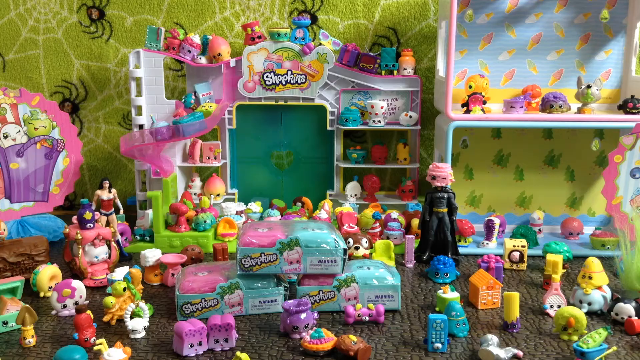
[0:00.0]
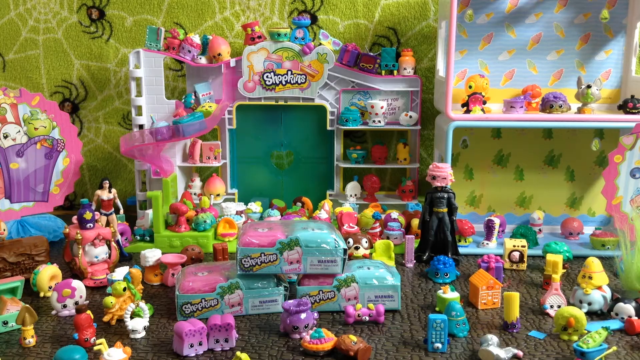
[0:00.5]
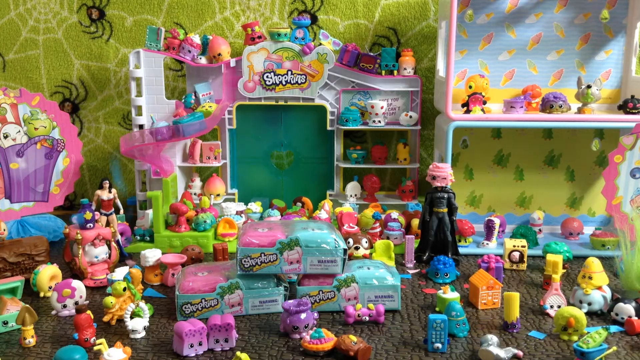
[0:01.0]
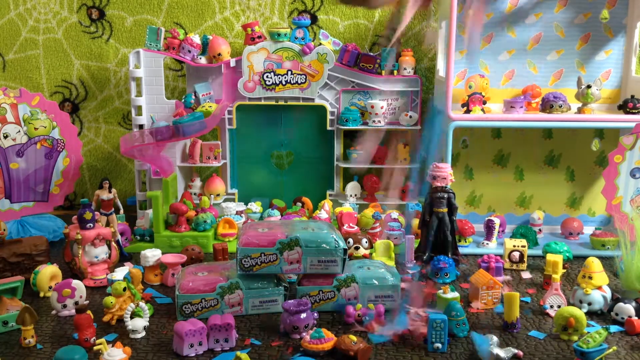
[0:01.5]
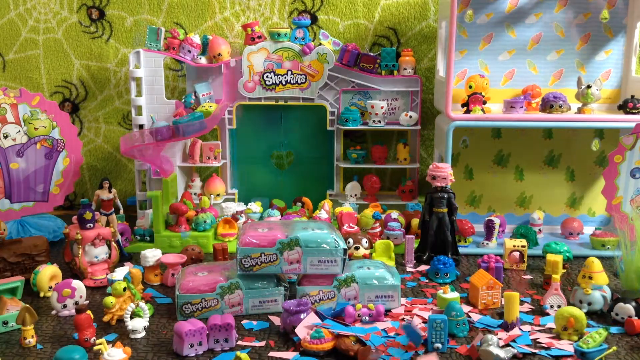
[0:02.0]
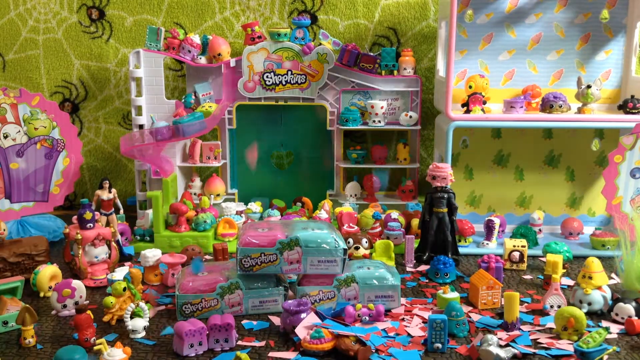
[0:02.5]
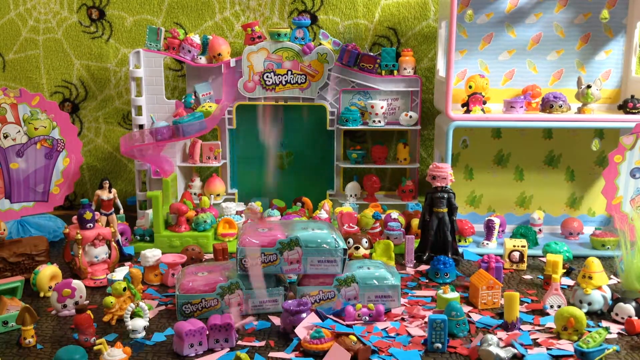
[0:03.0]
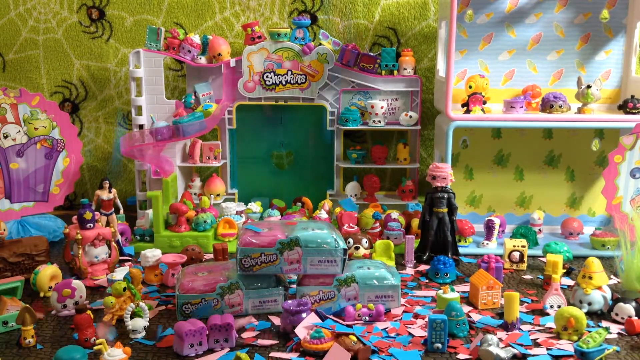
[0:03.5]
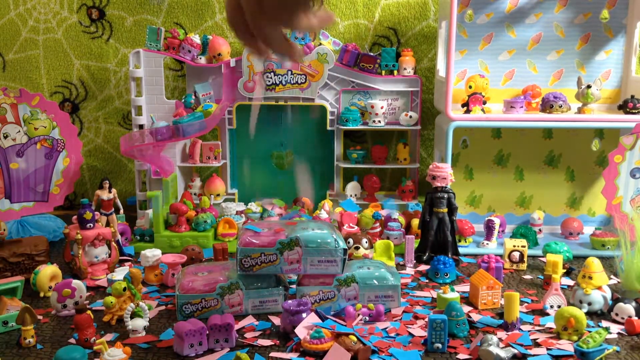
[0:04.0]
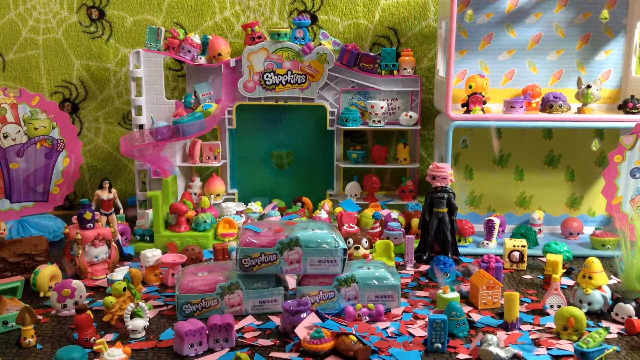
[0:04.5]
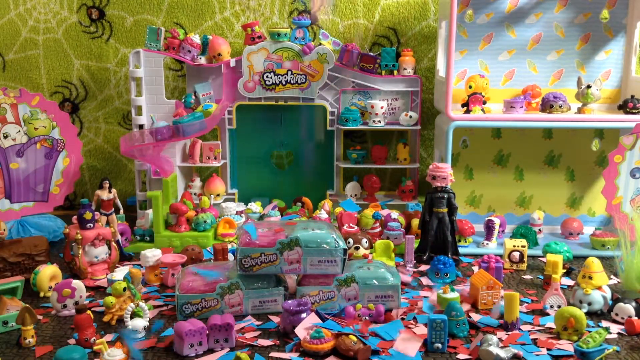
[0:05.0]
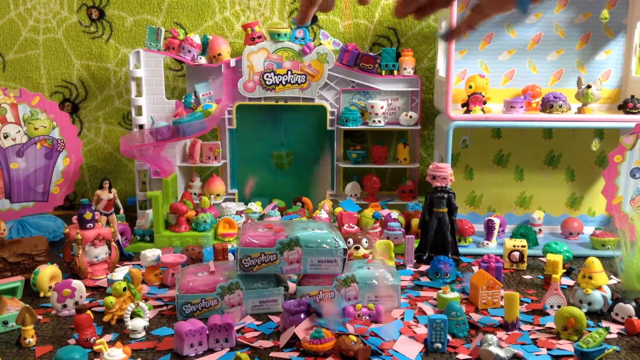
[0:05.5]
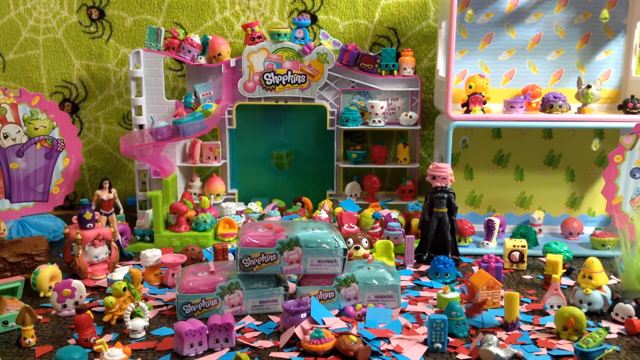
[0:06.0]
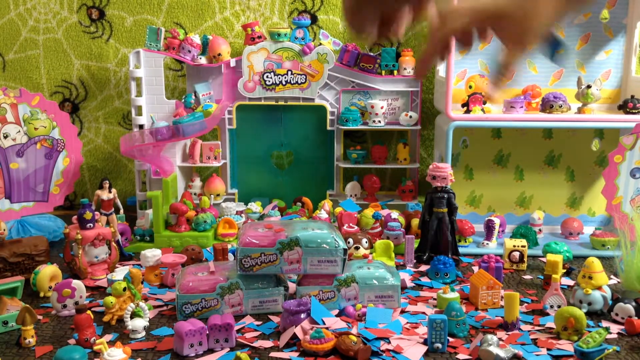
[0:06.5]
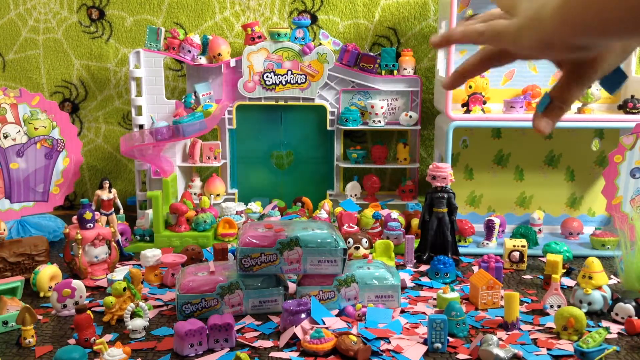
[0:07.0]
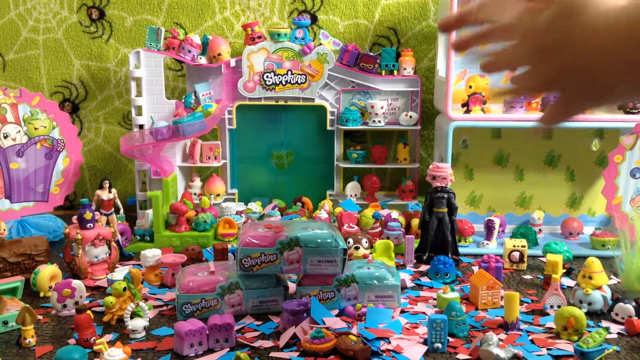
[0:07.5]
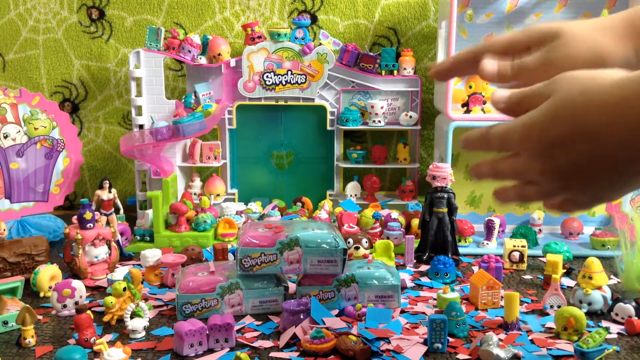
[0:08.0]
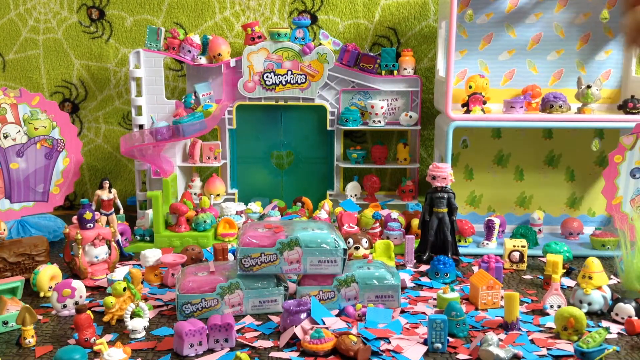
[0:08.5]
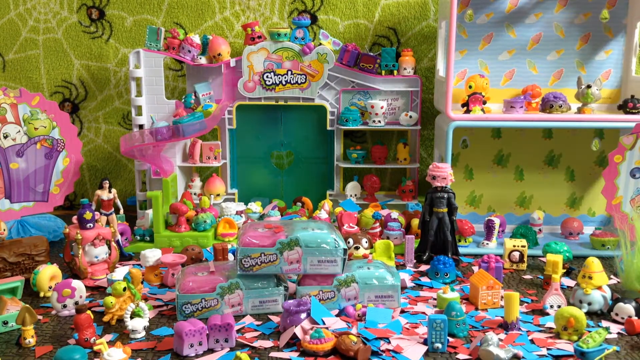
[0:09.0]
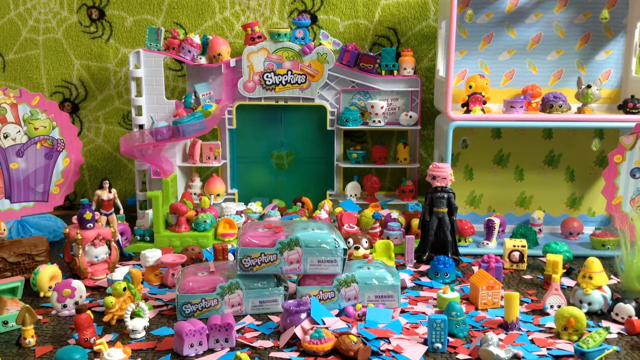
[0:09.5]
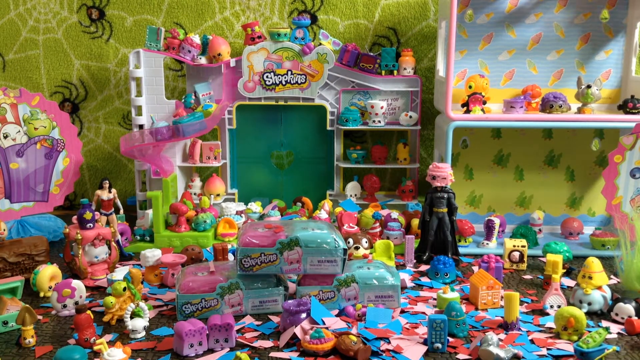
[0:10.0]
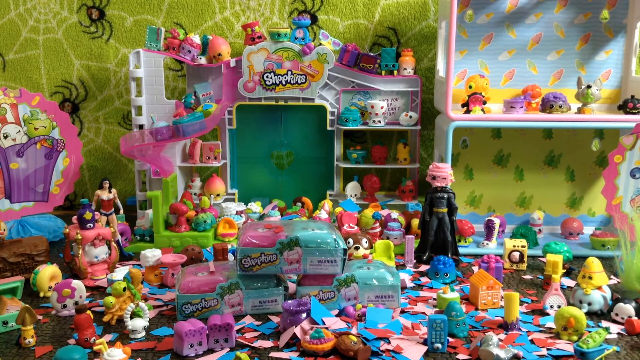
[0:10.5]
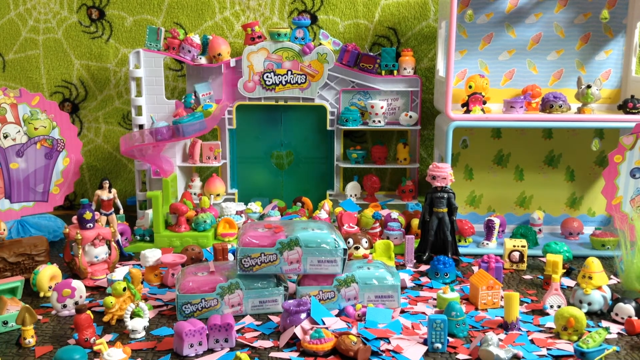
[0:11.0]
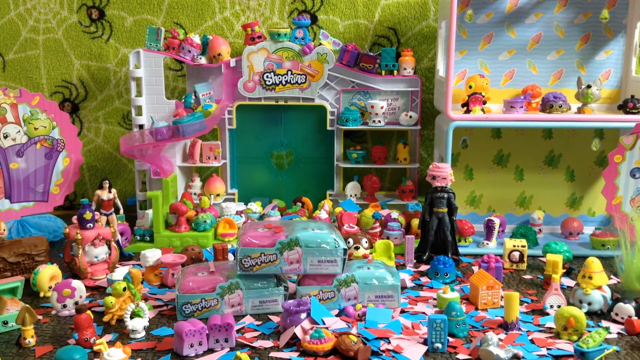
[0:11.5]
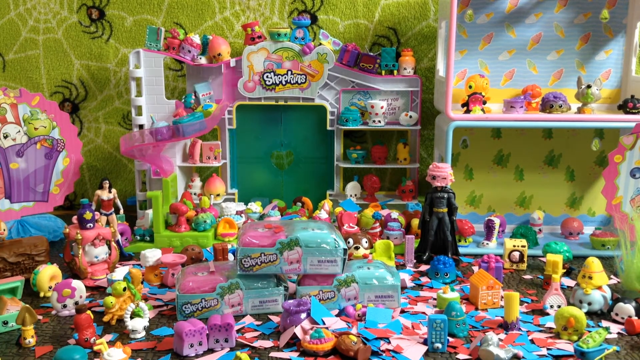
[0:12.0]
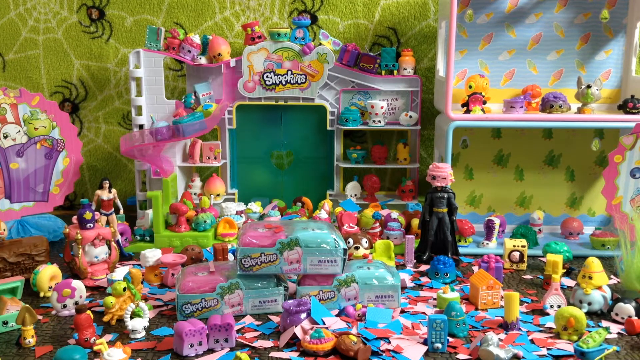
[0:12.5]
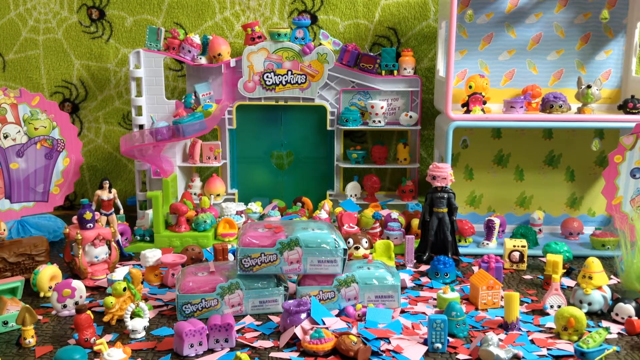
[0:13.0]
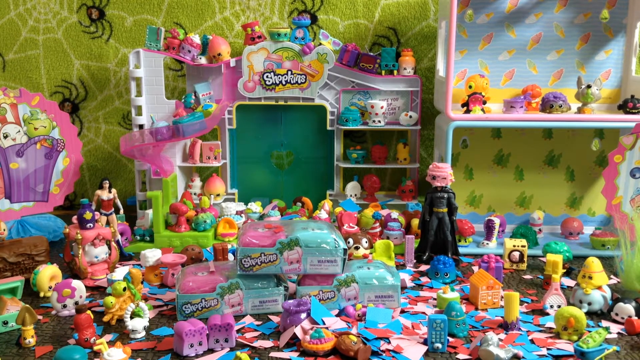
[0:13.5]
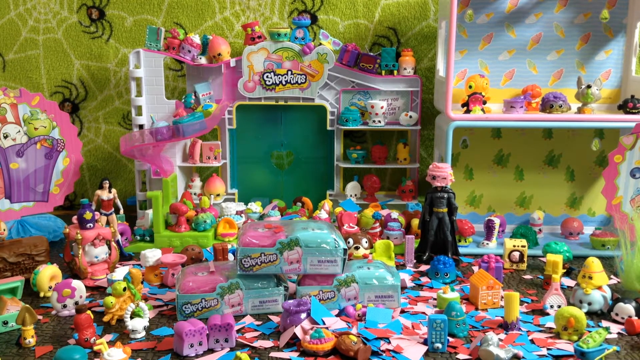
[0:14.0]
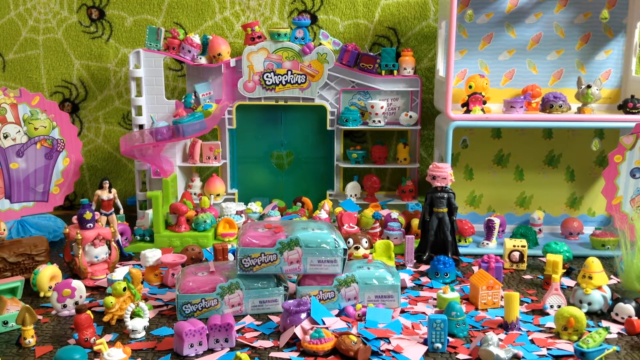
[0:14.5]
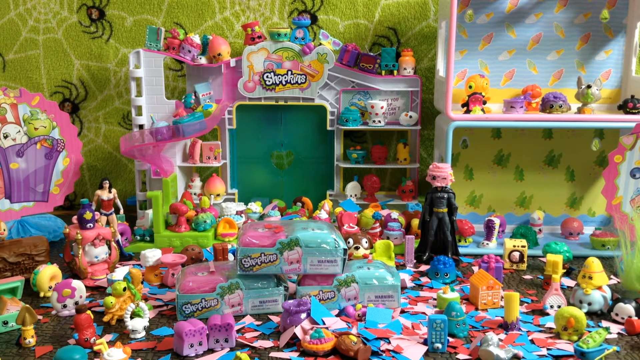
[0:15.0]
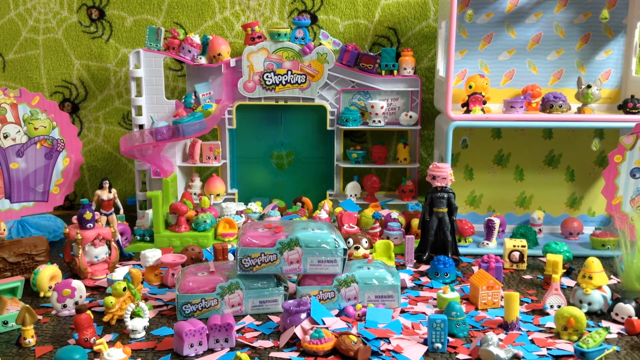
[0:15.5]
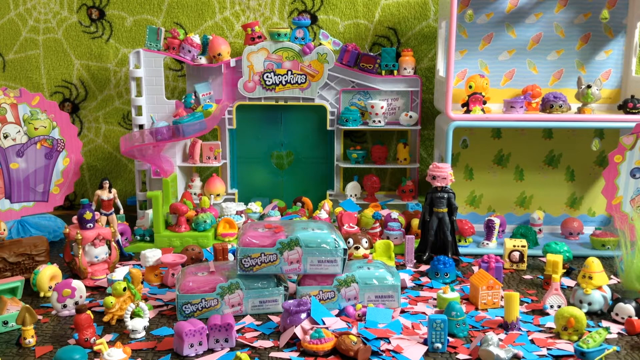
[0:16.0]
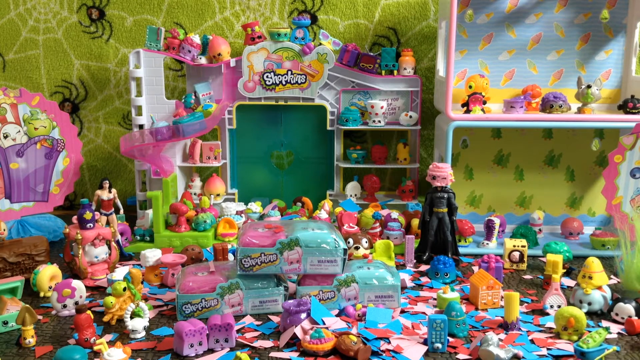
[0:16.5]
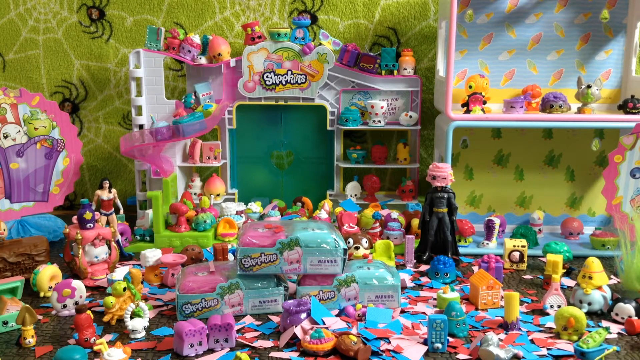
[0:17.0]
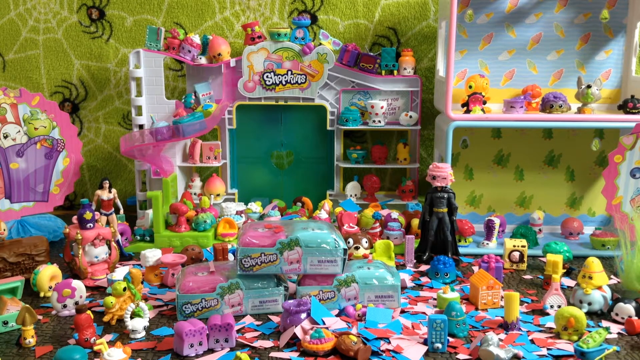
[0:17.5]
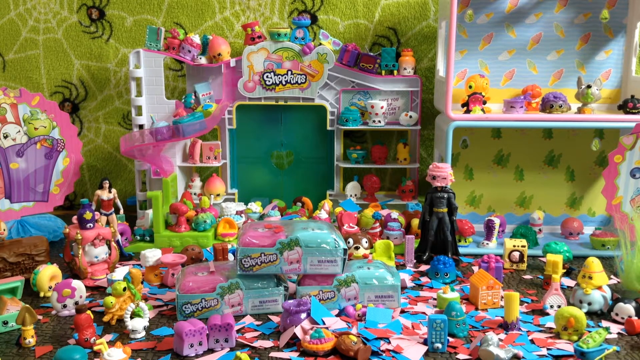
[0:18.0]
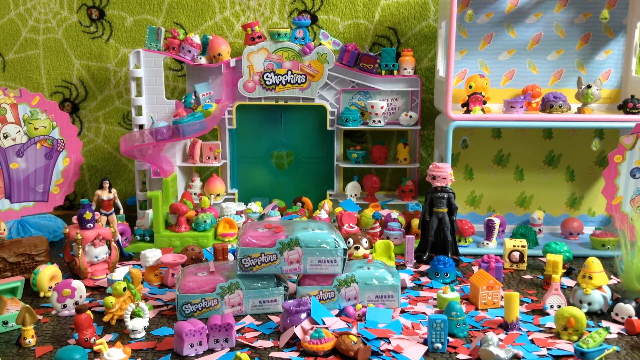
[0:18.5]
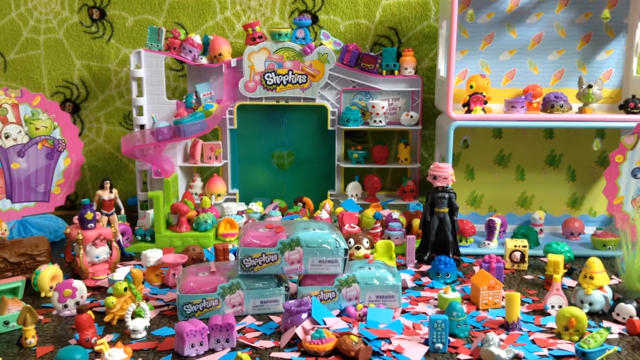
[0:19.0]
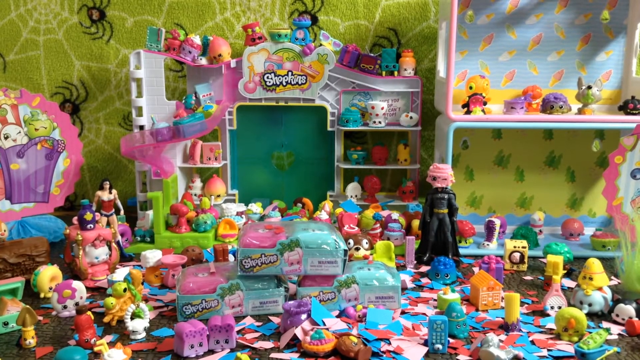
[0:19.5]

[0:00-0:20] A room is full of toys, very many of them. Over on one side is something that looks like a cabinet, with dolls and cars on top of it. Most of the toys are purple, and others are pink. A toy that looks like Batman, with a black costume and a yellow belt, is standing at the right corner, and another toy on the left side has a red blouse and blue pants. The wall is green, with photos of spiders on it and some green patches. A person sprinkles some papers in several colors, blue and pink.